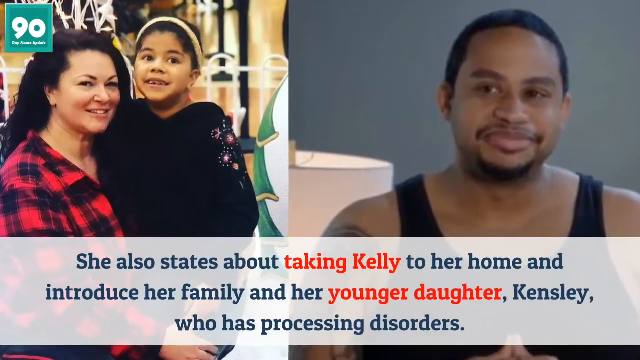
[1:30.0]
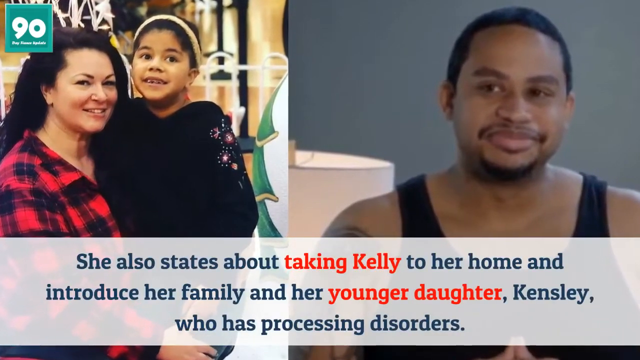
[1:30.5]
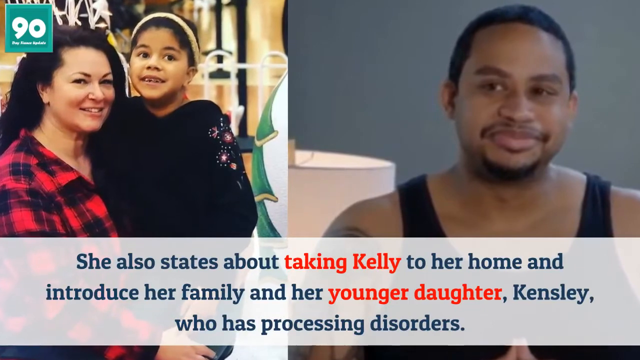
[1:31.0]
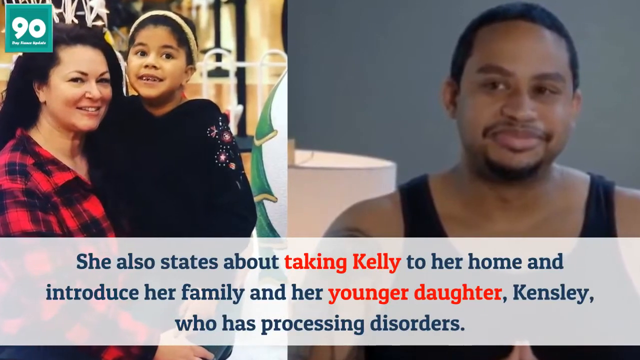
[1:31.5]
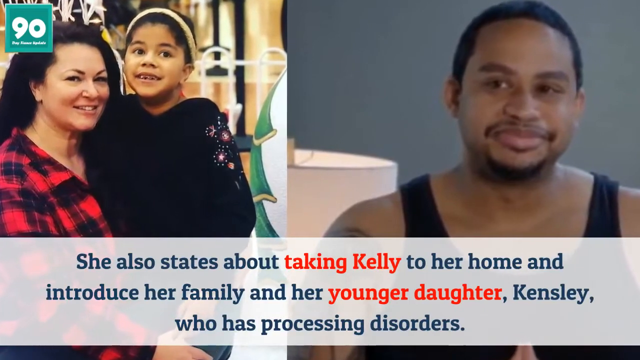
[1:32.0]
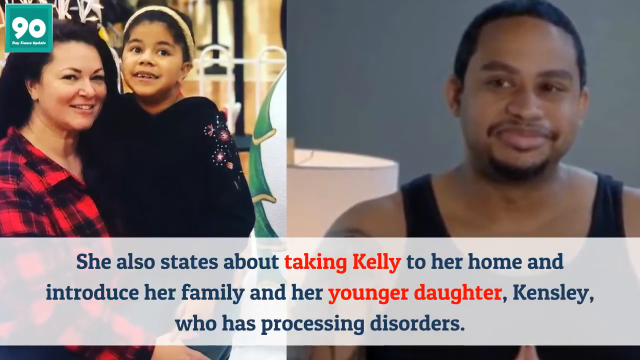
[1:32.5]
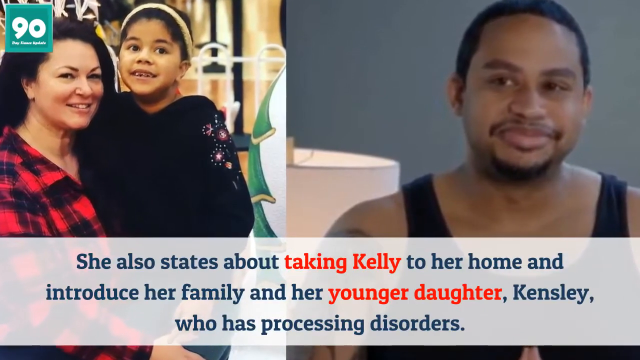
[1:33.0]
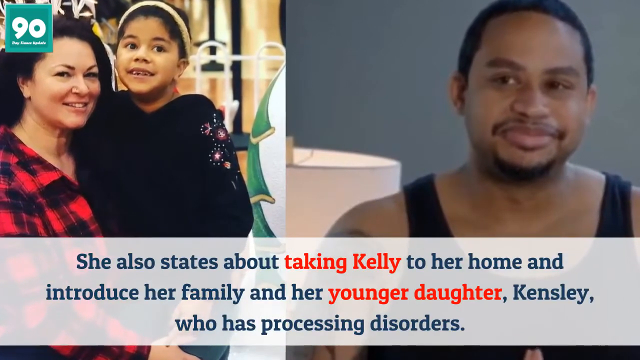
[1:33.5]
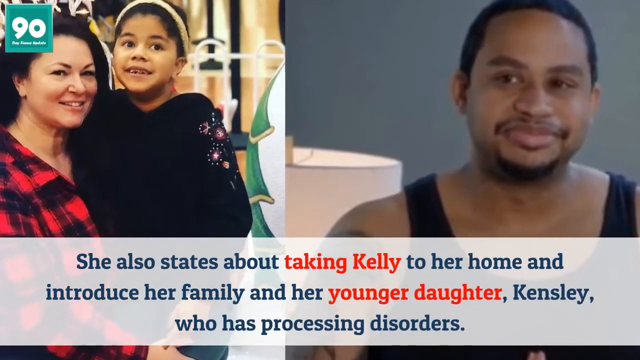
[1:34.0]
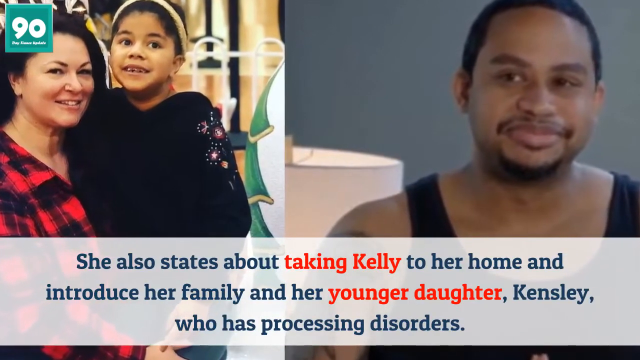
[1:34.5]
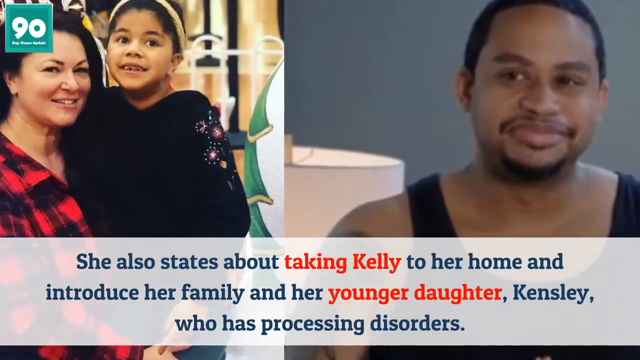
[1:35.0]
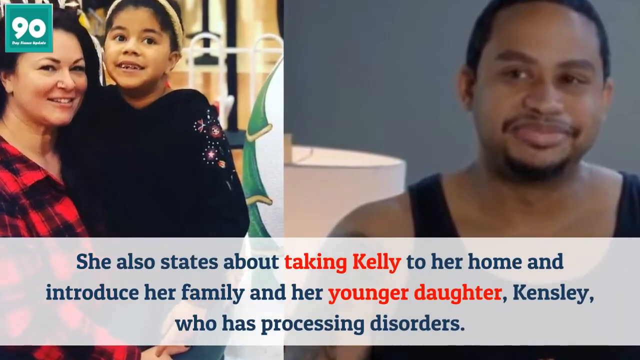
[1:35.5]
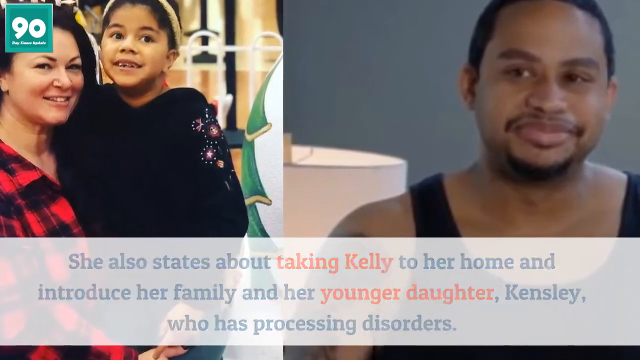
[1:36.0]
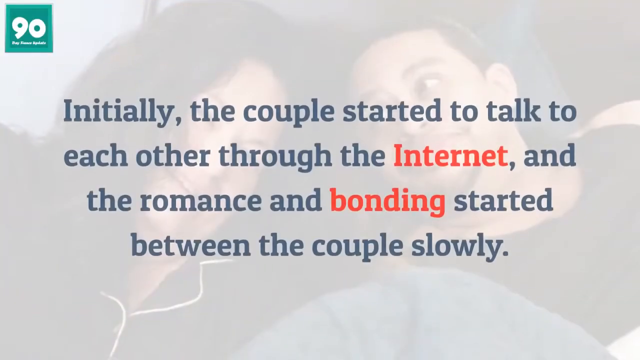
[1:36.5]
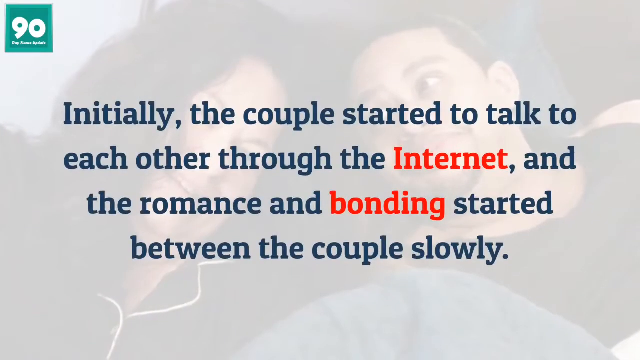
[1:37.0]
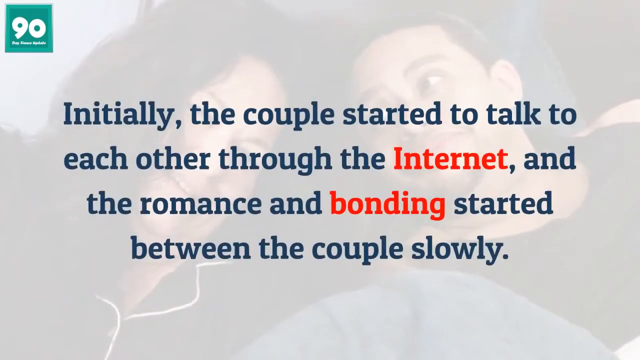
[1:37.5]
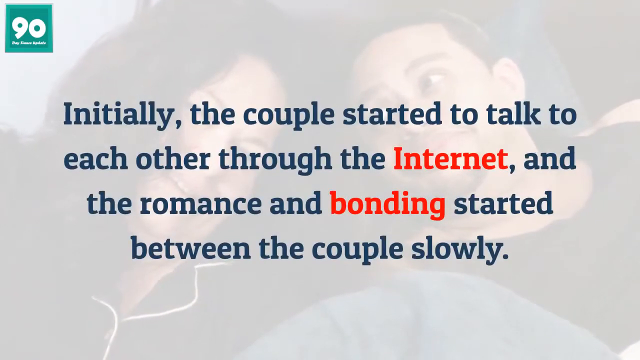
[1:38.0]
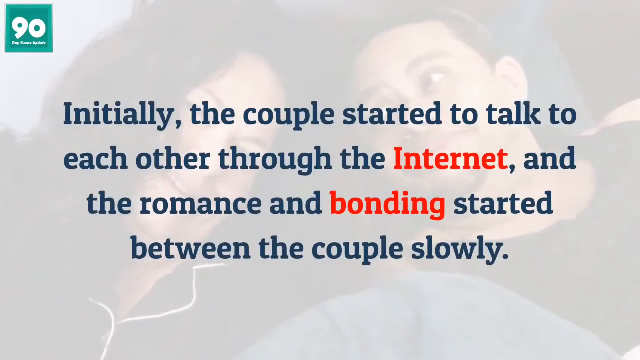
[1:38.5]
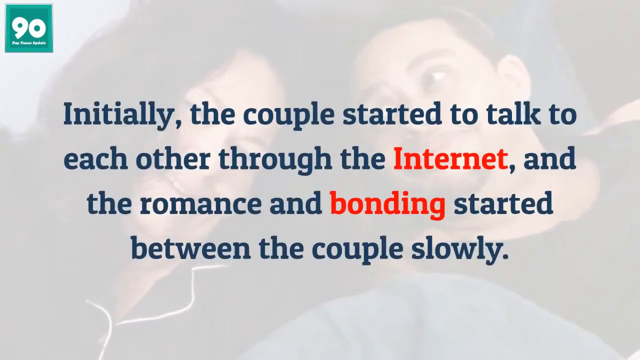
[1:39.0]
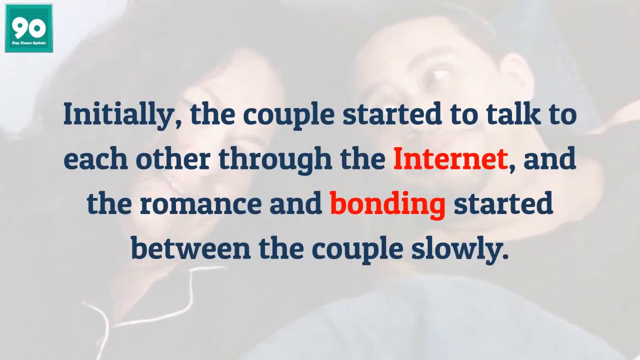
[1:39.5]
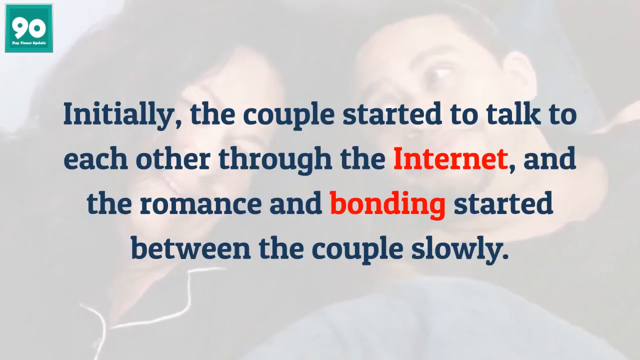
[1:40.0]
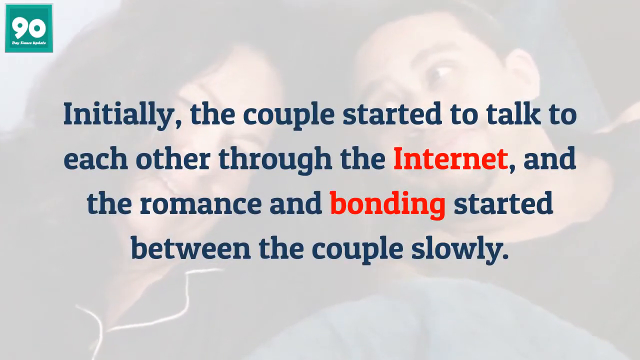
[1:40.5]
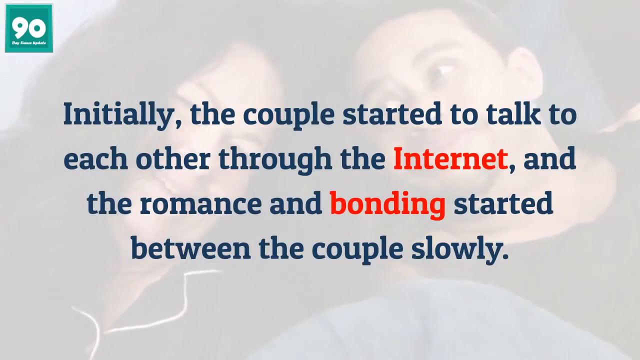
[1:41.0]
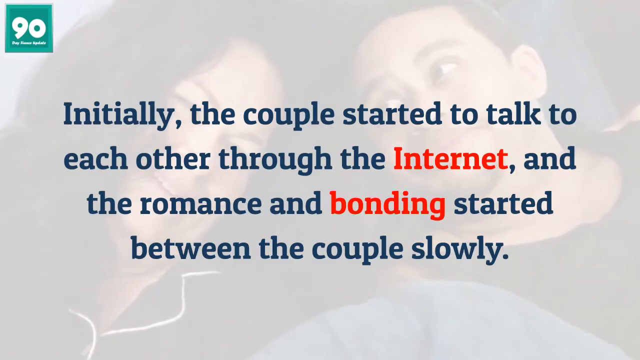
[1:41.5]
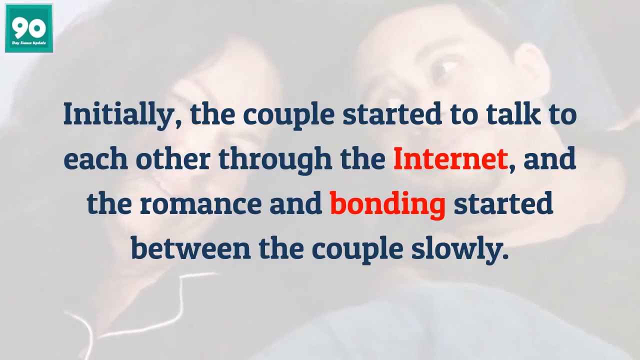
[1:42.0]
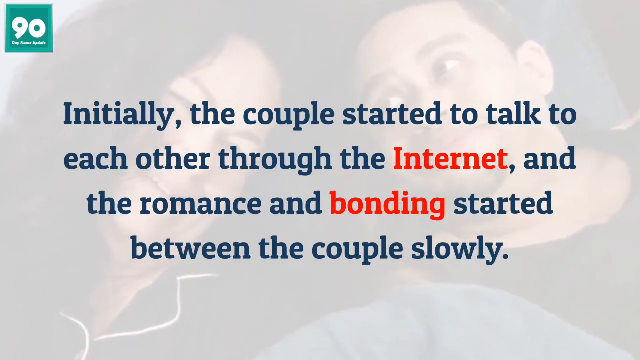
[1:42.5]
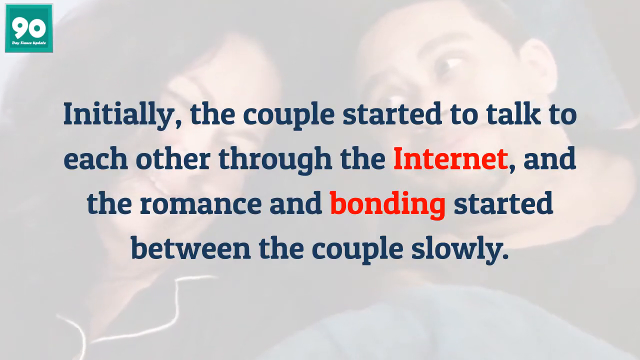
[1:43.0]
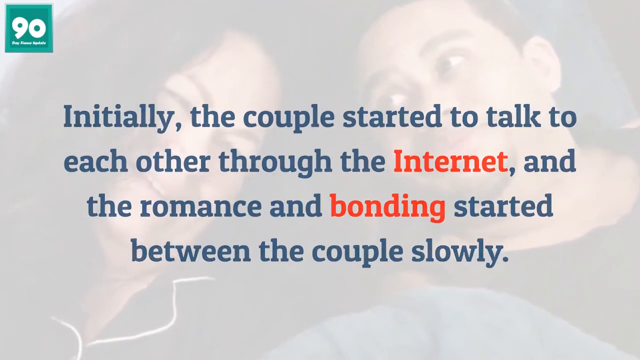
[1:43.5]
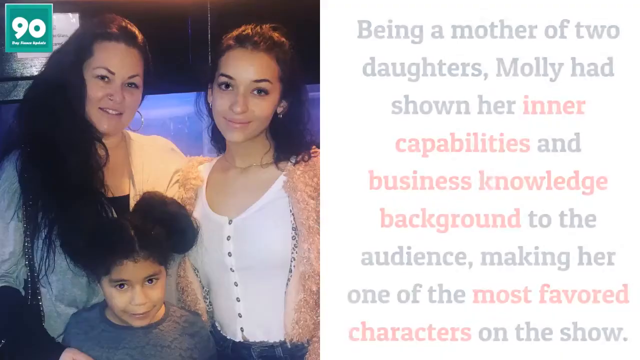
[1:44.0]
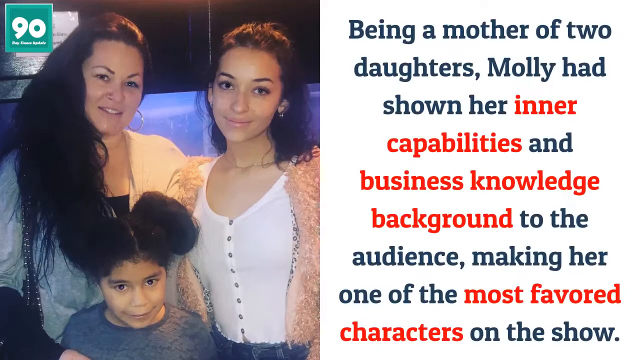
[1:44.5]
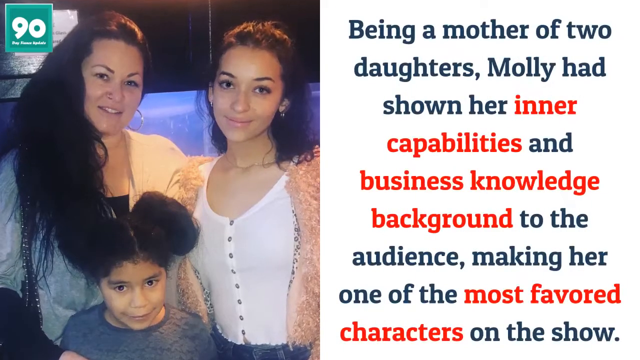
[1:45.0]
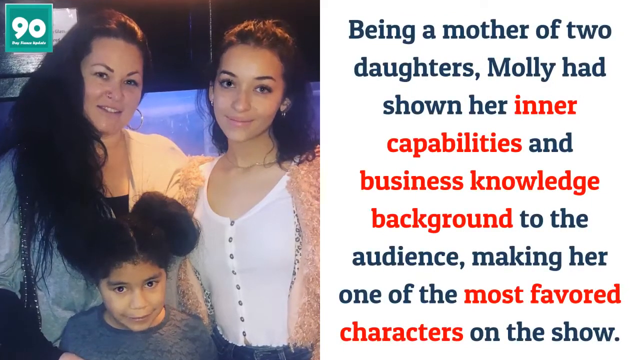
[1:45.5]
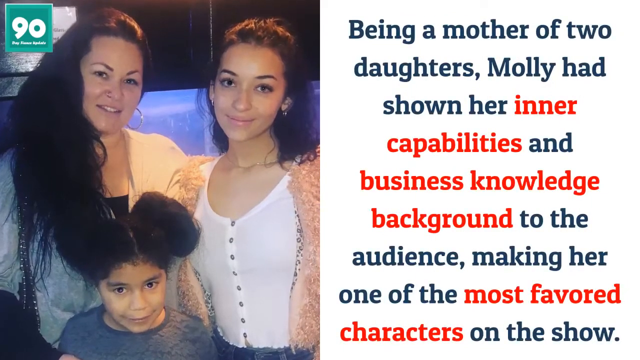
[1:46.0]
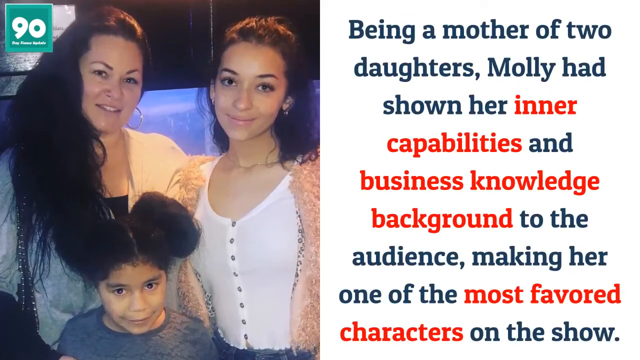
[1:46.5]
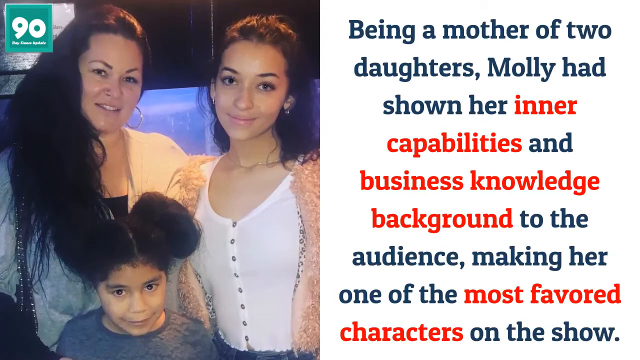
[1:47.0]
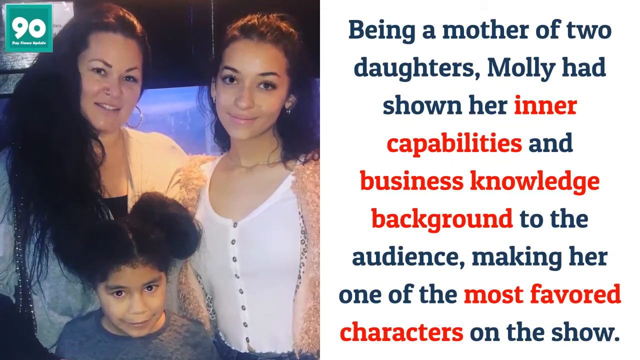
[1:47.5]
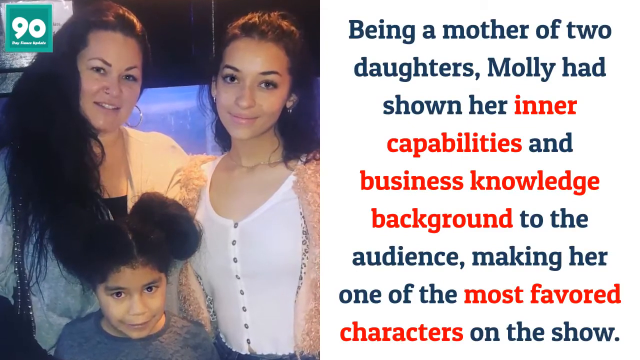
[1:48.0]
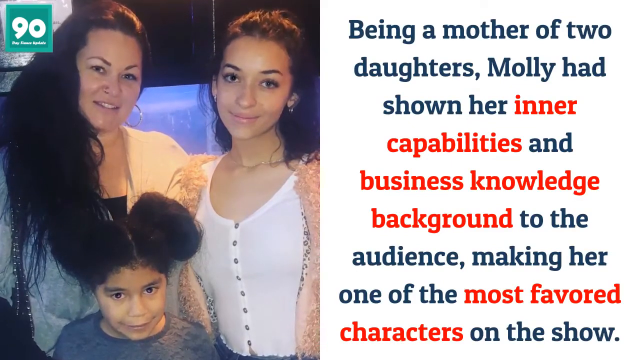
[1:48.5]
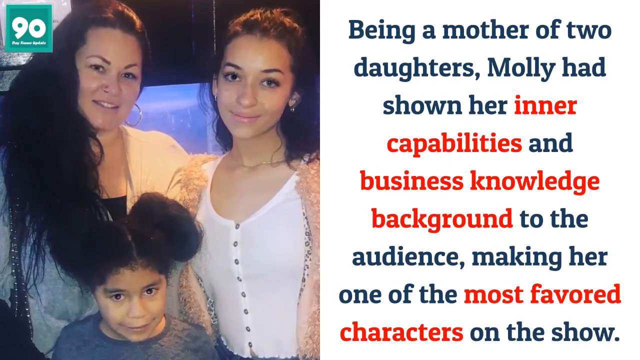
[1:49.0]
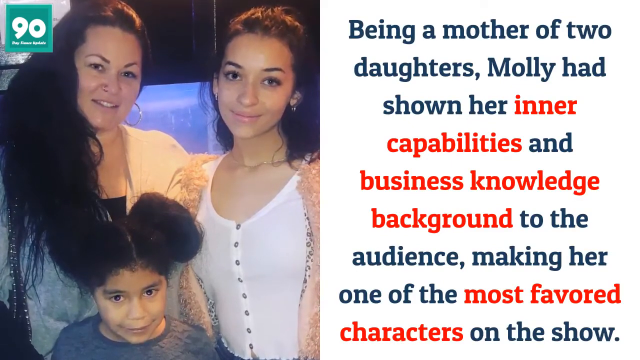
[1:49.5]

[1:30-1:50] Two images are shown. The left image shows a woman in a plaid shirt holding onto a child, a little girl wearing a black sweater and a headband. The right image shows a man with a mustache and a goatee, very short shaved hair, and a tattoo on his right arm. At the bottom of the two images is a white, transparent banner with captions written over it: "She also states about taking Kelly to her home and introduce her family and her youngest daughter Kinsley who has processing disorders." The screen then transitions to a faded image of a woman and a man laying on the floor, laughing. Words written over this faded image say "initially the couple started to talk to each other through the internet, and the romance and bonding started between the couple slowly."